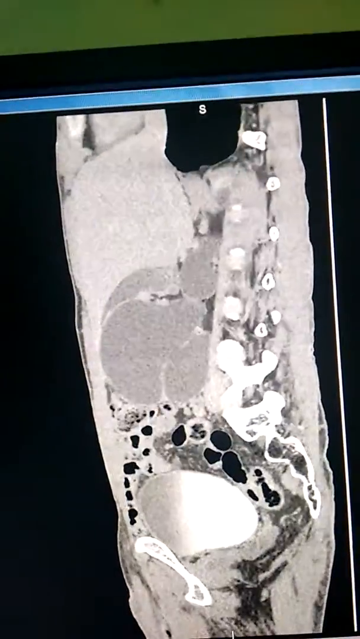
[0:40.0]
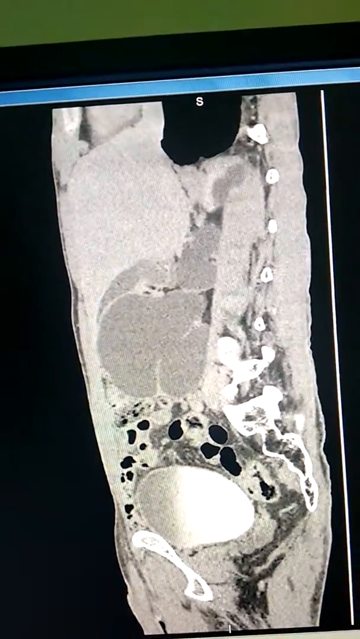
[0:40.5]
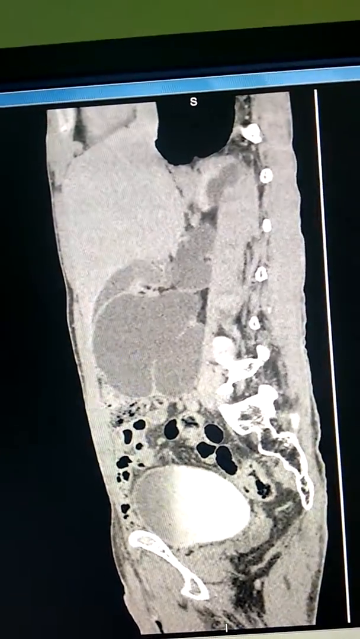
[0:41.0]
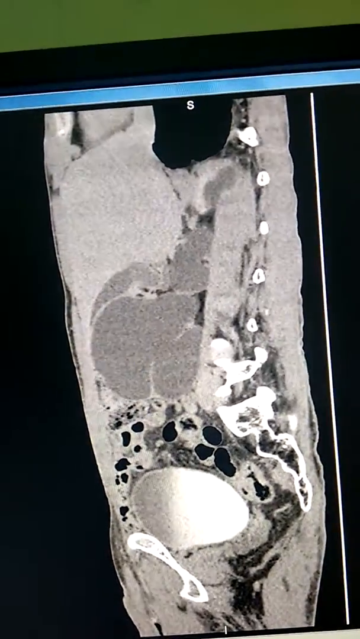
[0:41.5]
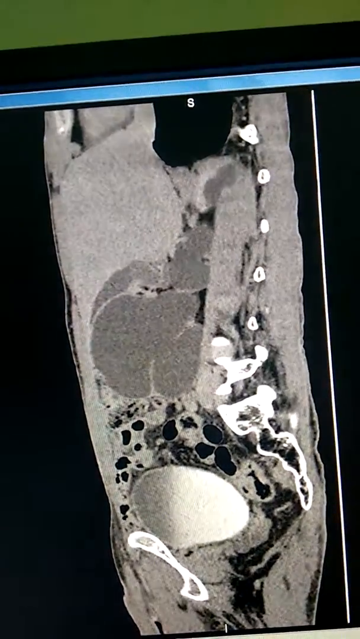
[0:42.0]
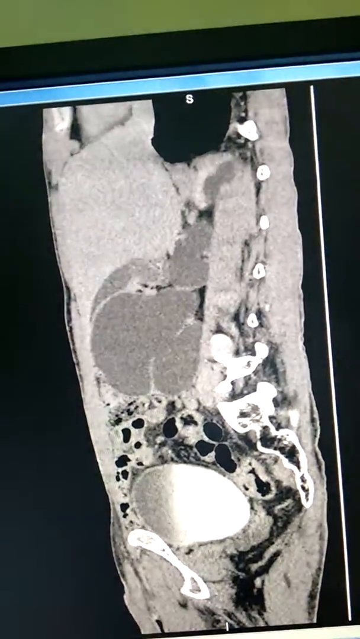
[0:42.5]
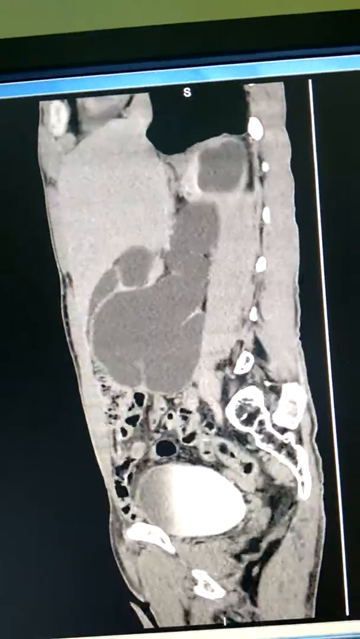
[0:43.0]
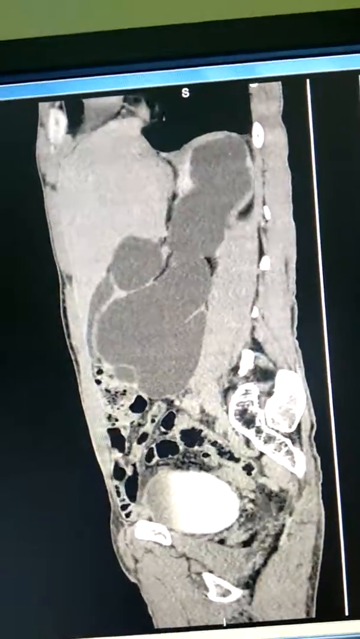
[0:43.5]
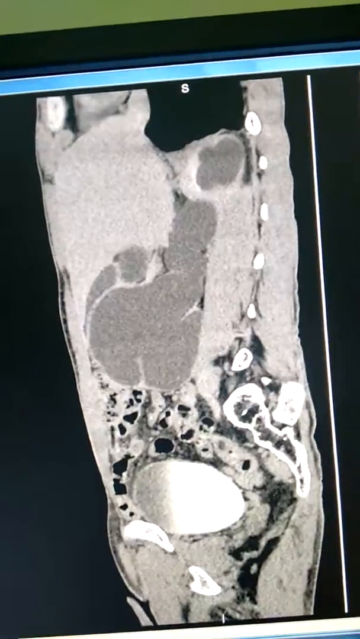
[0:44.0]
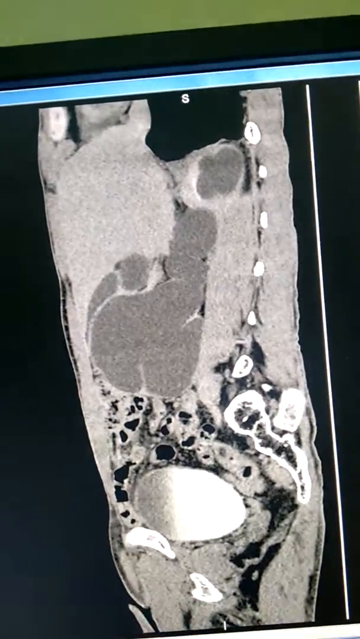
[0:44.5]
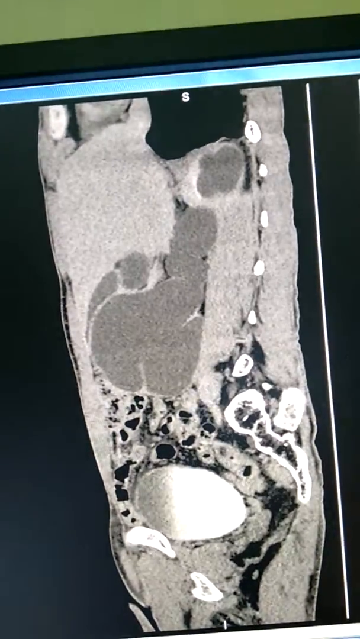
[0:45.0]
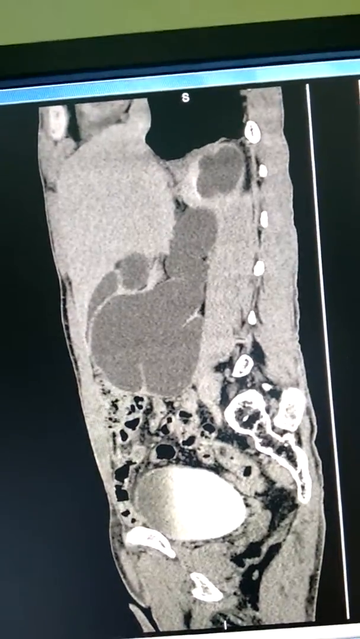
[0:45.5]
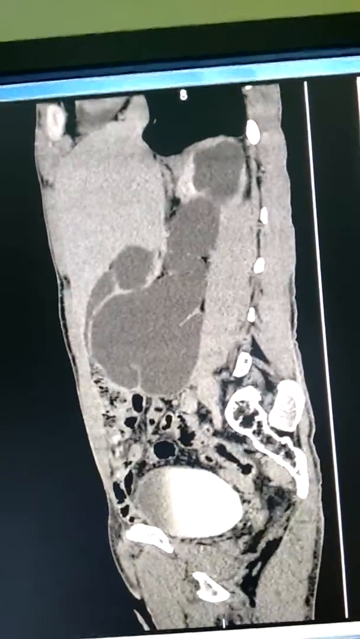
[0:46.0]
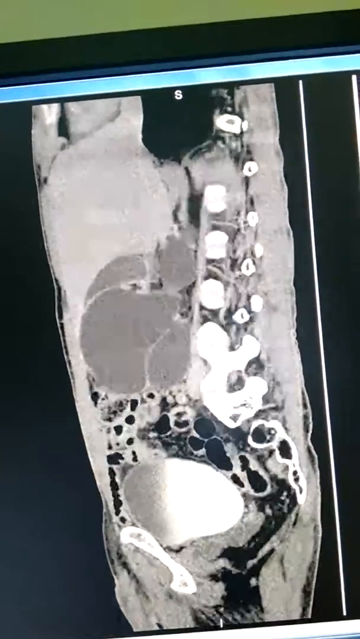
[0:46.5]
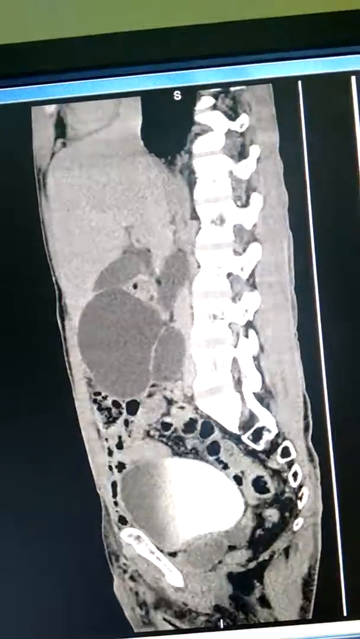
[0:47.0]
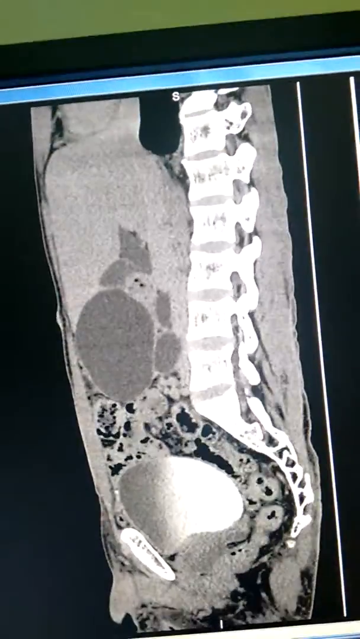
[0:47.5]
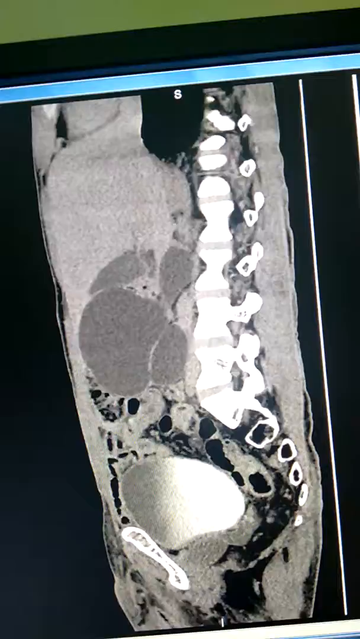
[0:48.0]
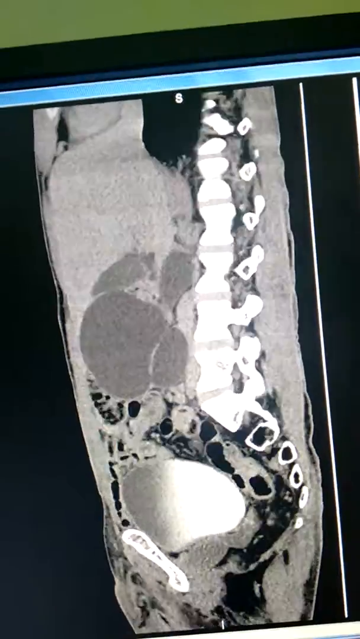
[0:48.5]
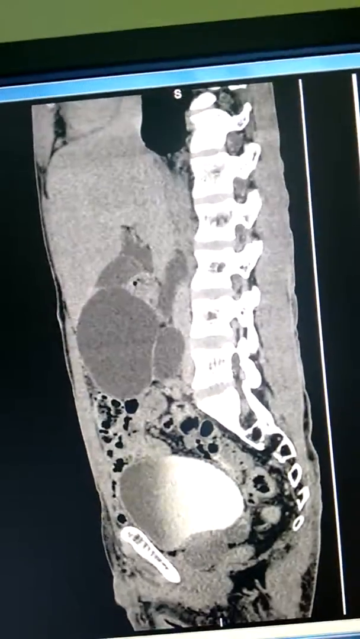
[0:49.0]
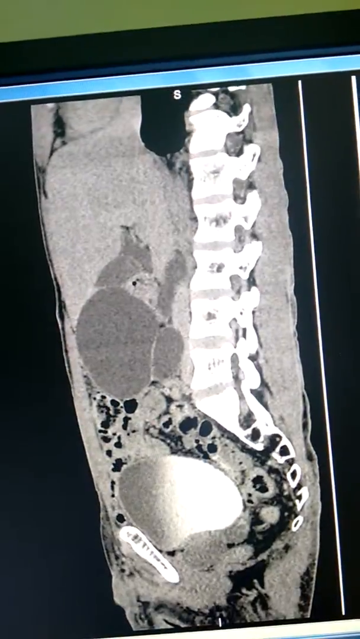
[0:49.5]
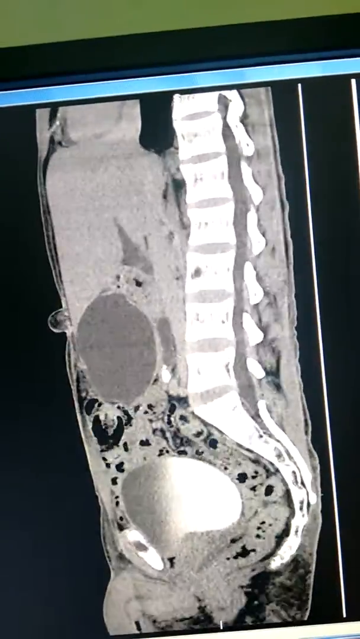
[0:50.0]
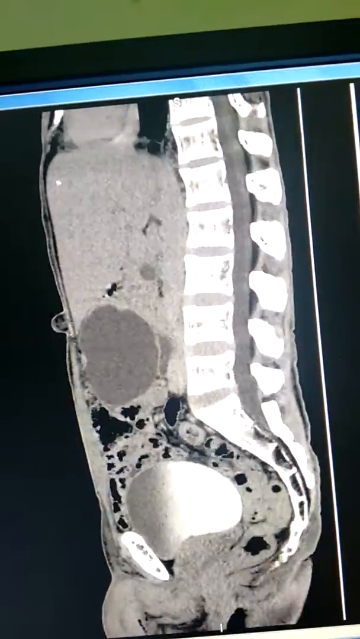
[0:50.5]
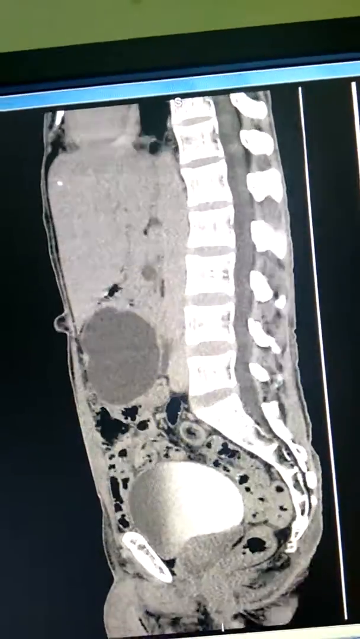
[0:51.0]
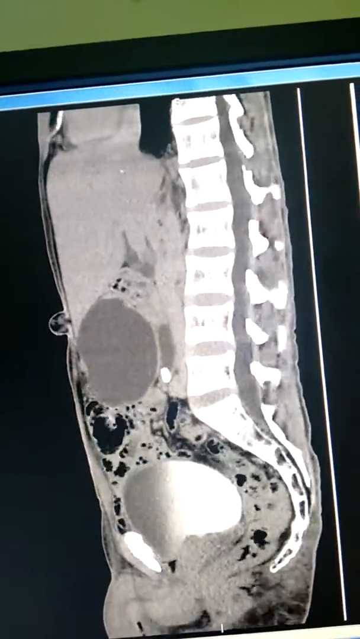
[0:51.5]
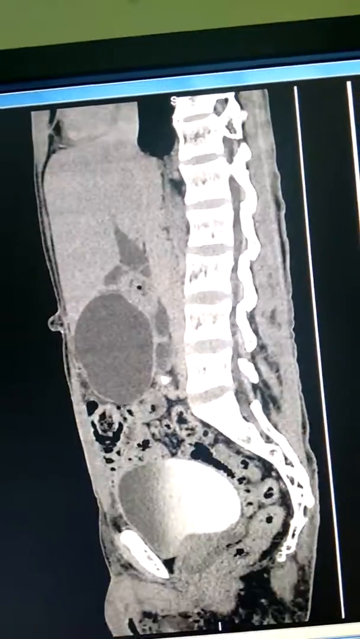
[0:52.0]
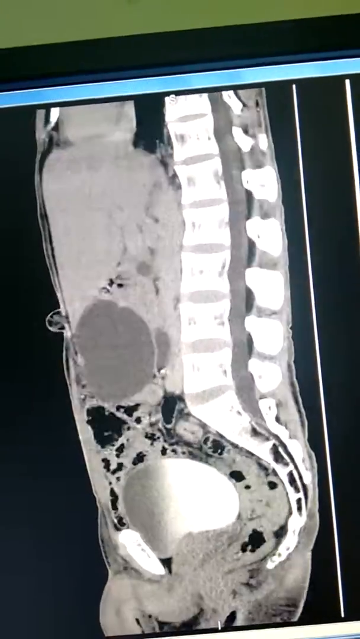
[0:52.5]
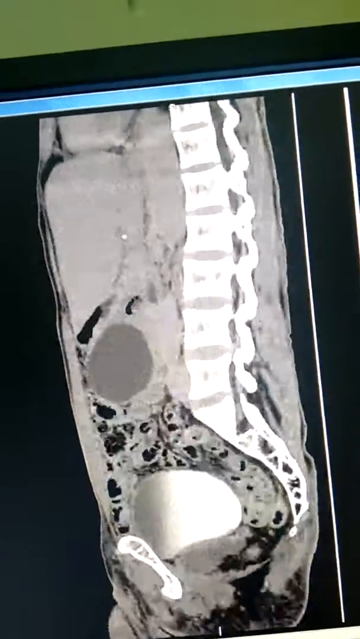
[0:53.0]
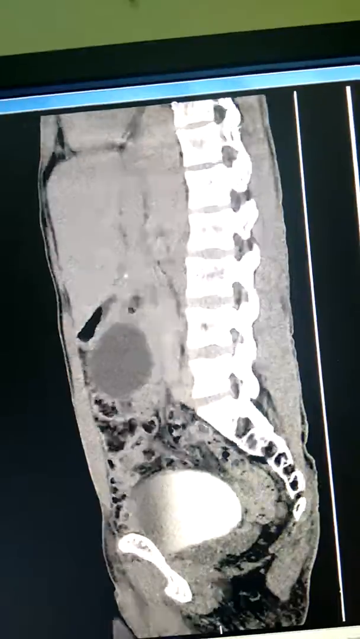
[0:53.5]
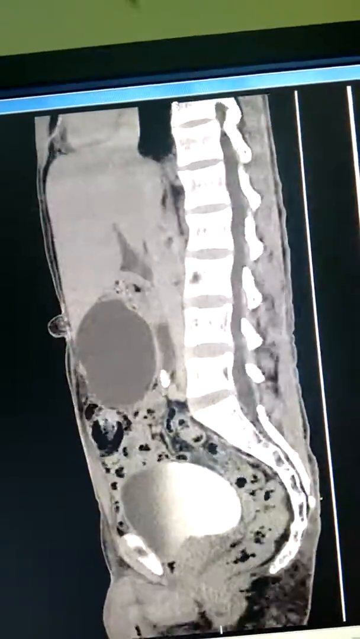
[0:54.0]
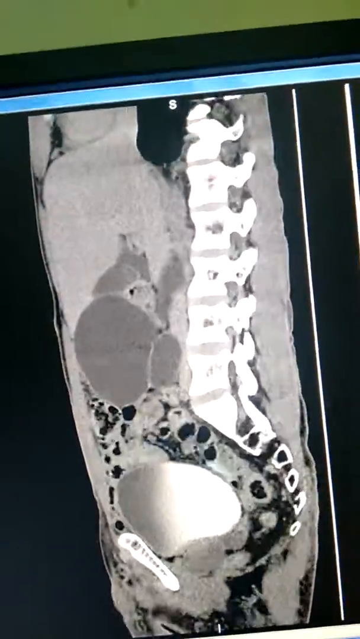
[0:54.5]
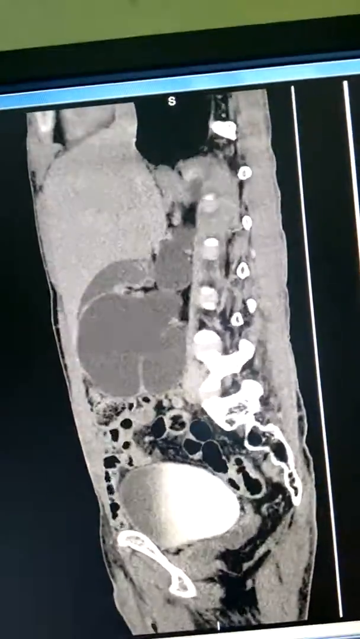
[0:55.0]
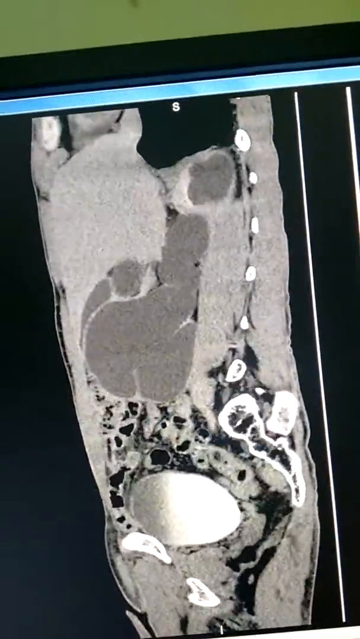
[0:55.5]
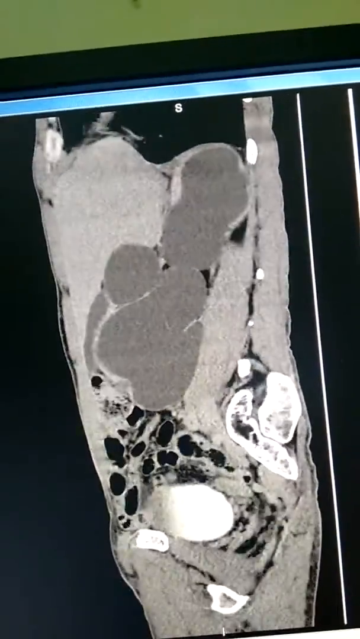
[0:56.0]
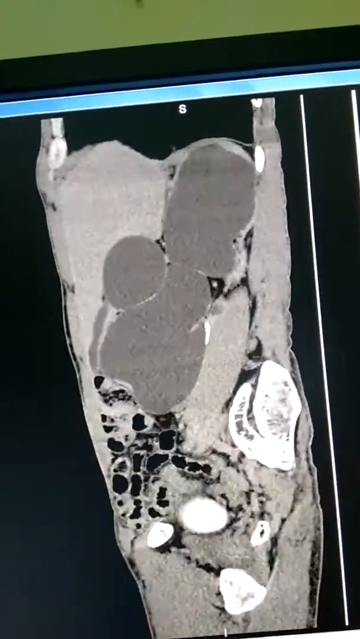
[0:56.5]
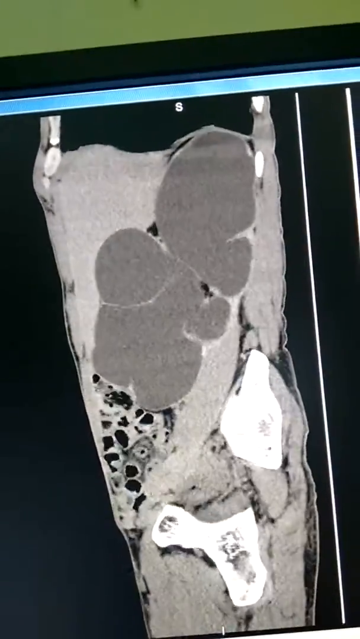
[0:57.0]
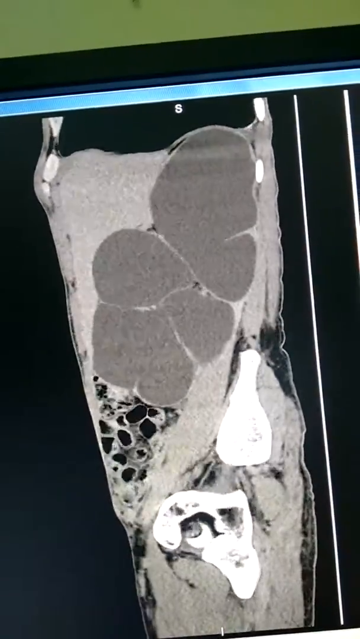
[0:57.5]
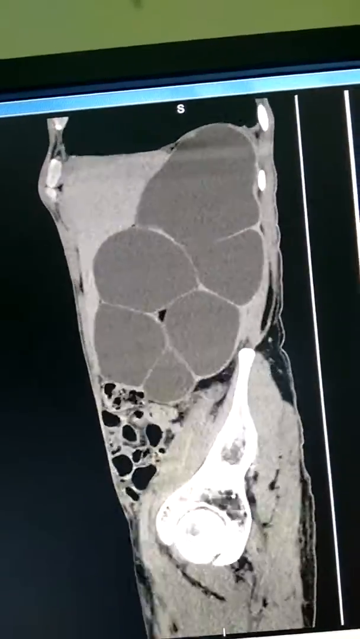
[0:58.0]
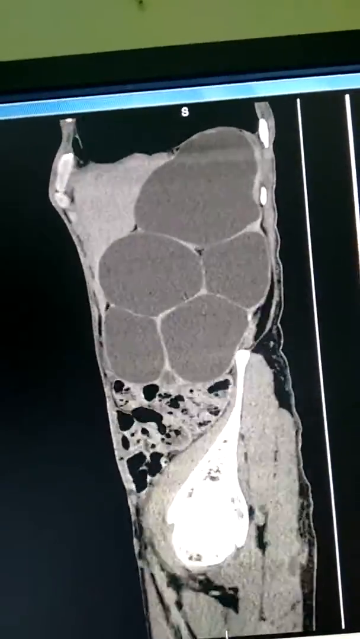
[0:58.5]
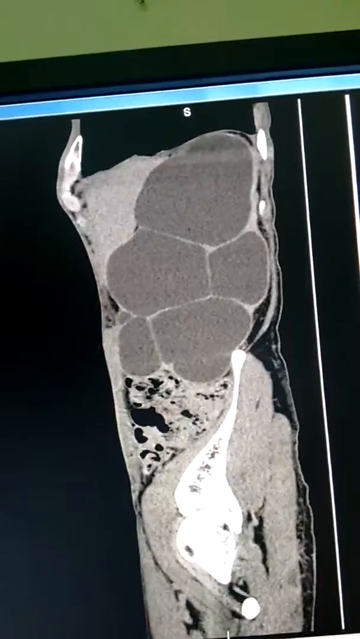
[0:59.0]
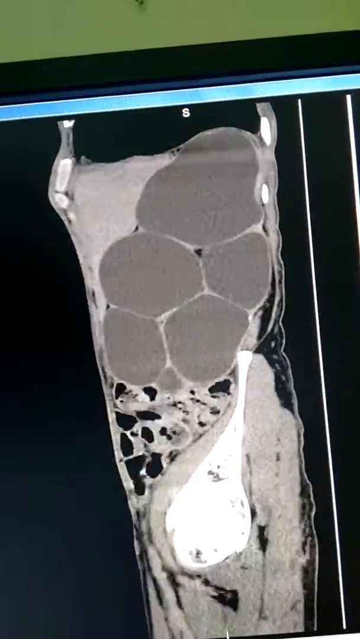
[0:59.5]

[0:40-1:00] The view is almost lateral, and just a tiny bit of the spine is still visible. Some darker coloration comes in, then the spine is fully shown again, disappears, and is fully shown once more. It may be showing different depths of the exam, going back and forth, possibly for a doctor to look for irregularities in the spine. A clearer, shiny, round object at the bottom stays somewhat consistent while the other shapes change more. There are some black parts as well, and it seems to be an x-ray of a man, since the intimate area seems to be visible for a short time.